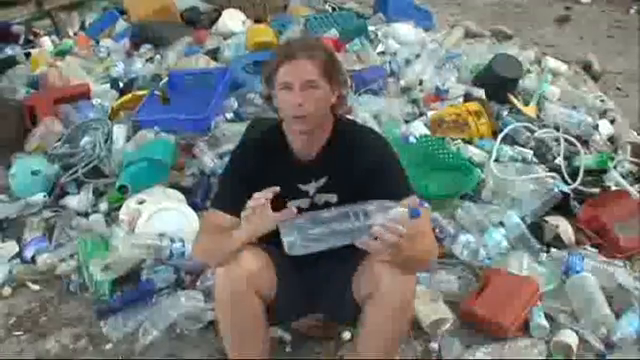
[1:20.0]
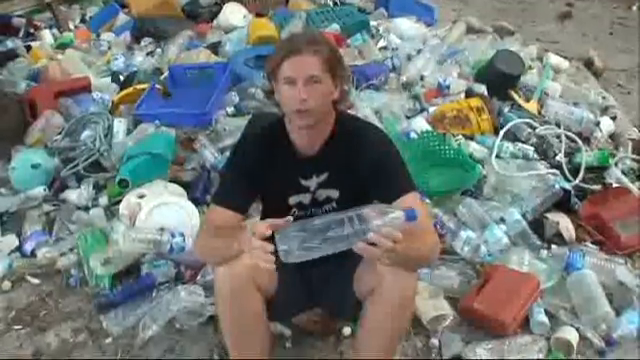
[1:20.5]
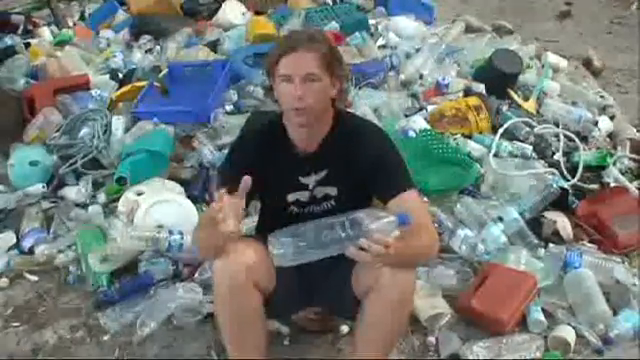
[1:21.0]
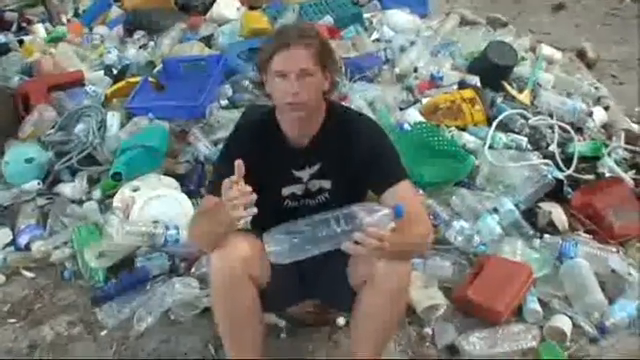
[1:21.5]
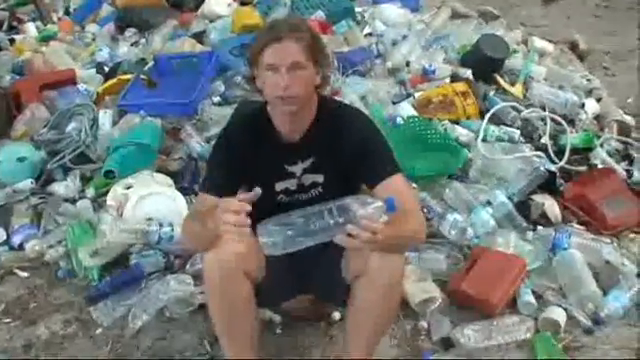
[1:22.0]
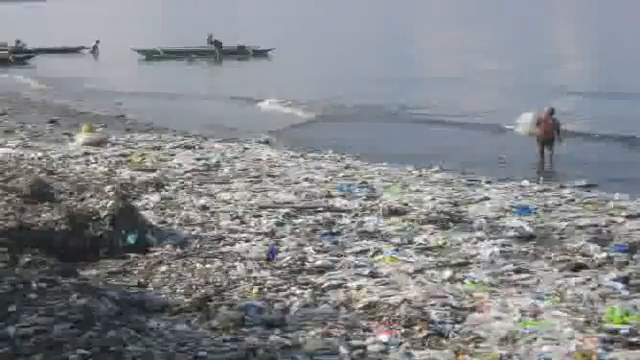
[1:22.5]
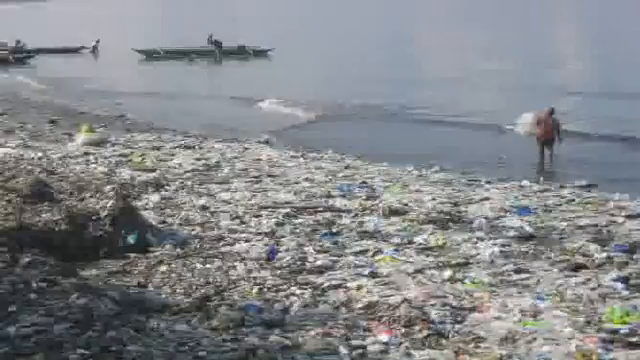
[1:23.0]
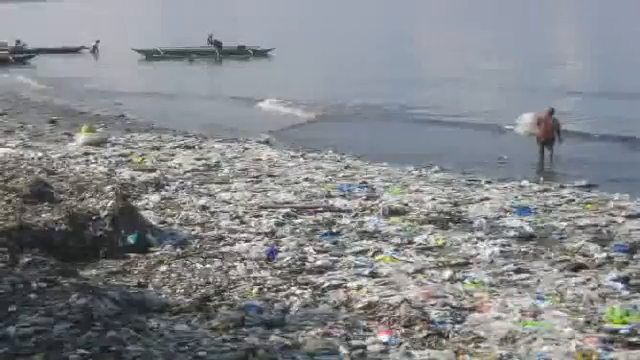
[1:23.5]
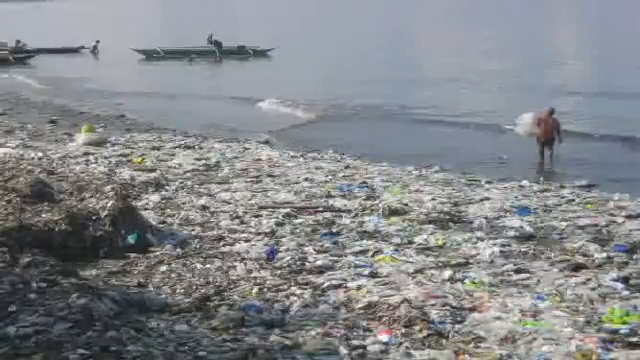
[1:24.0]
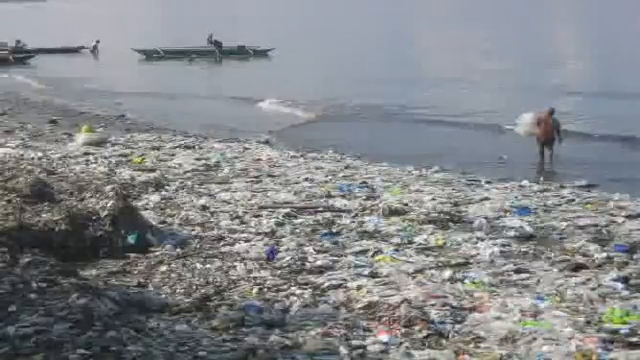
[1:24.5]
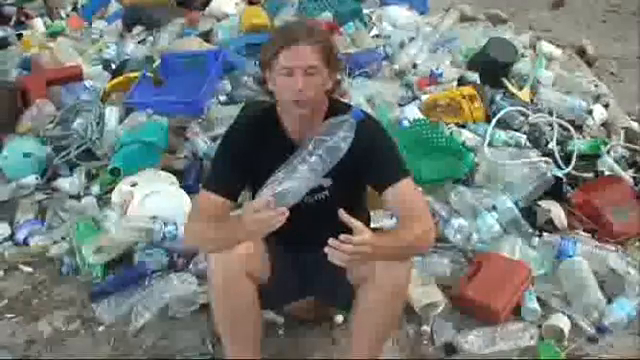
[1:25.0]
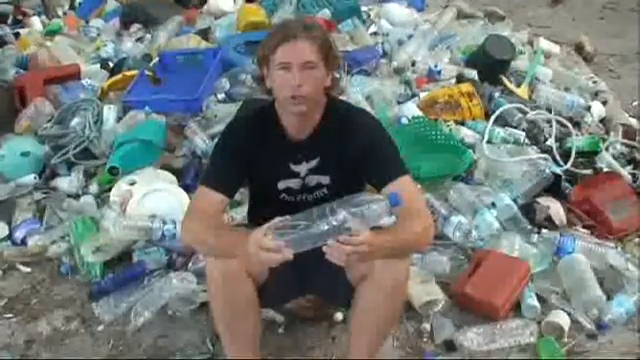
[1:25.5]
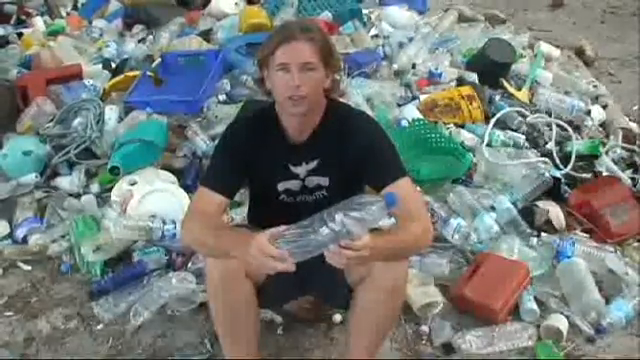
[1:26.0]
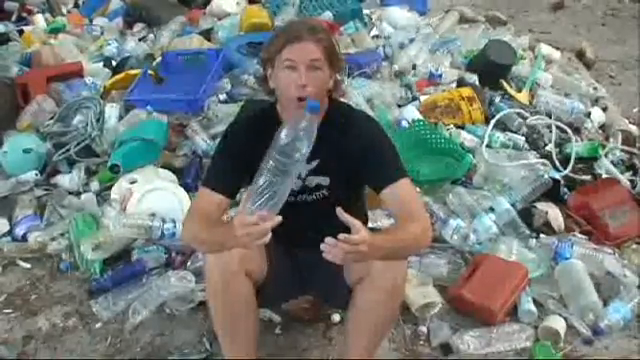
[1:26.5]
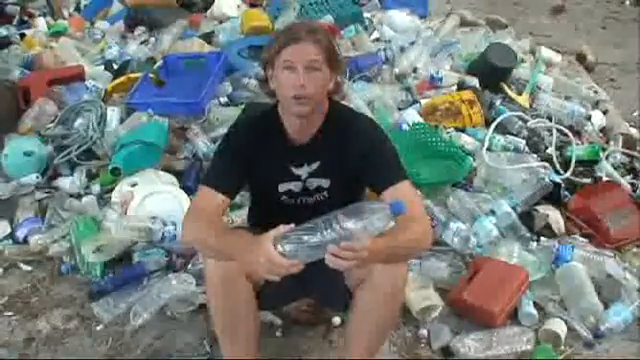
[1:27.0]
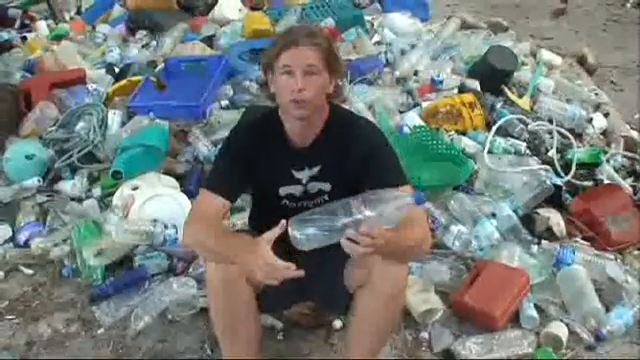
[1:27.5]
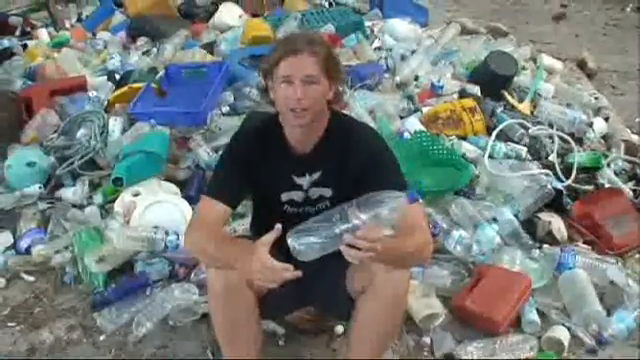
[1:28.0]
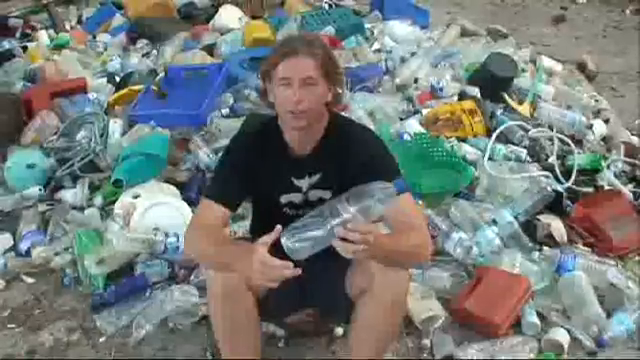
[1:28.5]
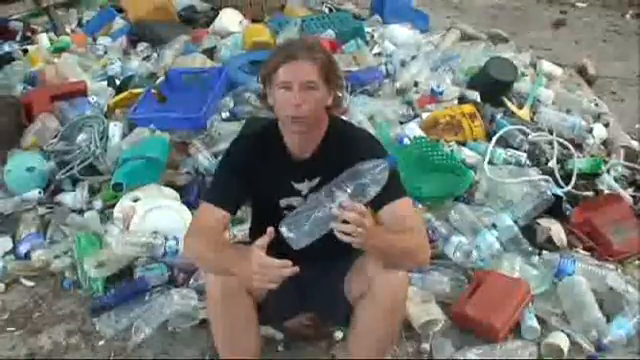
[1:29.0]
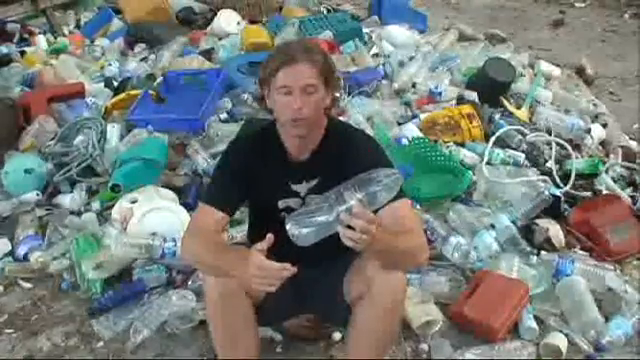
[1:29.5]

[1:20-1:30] The man sits on a pile of trash, wearing a white t-shirt, a black t-shirt with a white design on the front, and black shorts. He holds a transparent bottle with a blue lid. Then a picture of a seashore appears, with trash surrounding all of the land; it looks like trash washed onto the ground by the water. In the distance are two boats, and a man is in the water holding a piece of trash. The video then returns to the man sitting in the trash, still speaking to the camera while holding a plastic bottle.